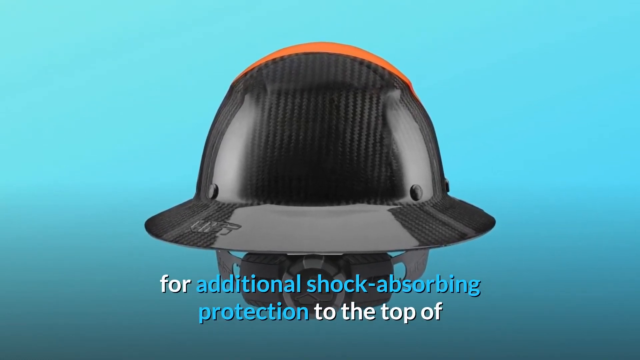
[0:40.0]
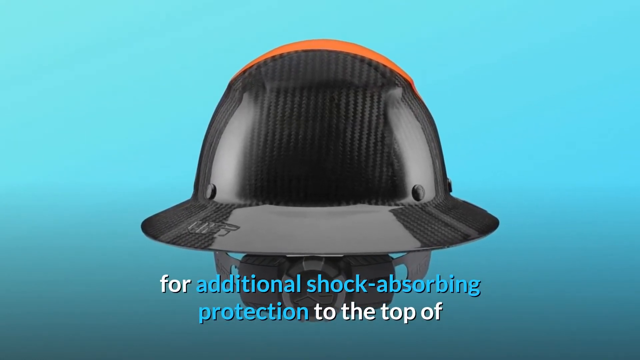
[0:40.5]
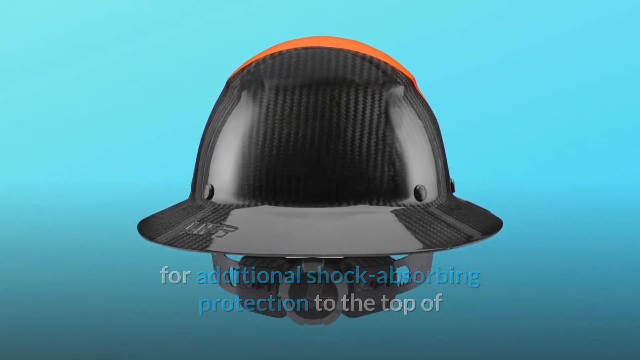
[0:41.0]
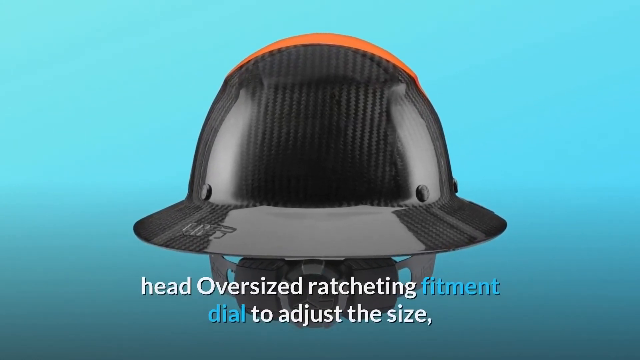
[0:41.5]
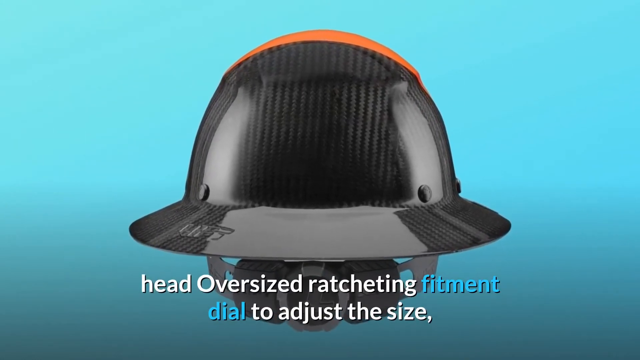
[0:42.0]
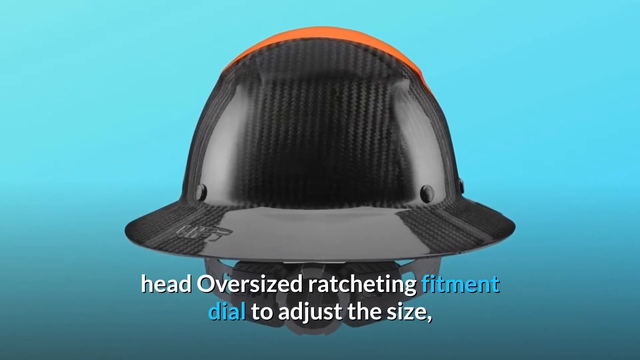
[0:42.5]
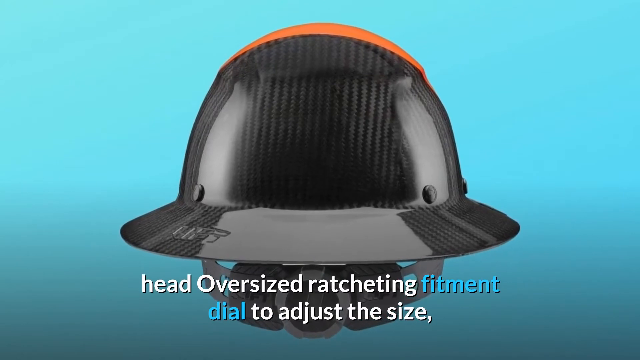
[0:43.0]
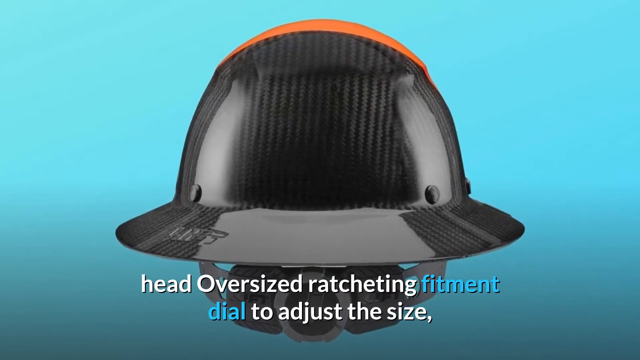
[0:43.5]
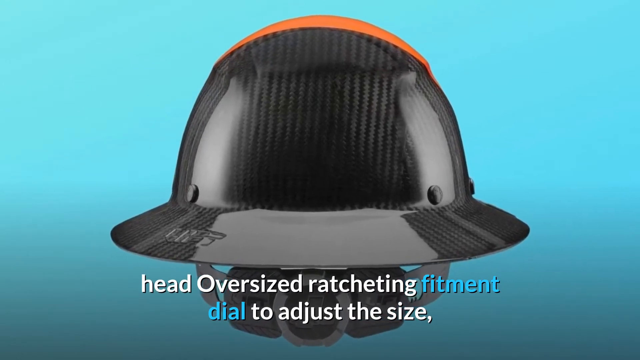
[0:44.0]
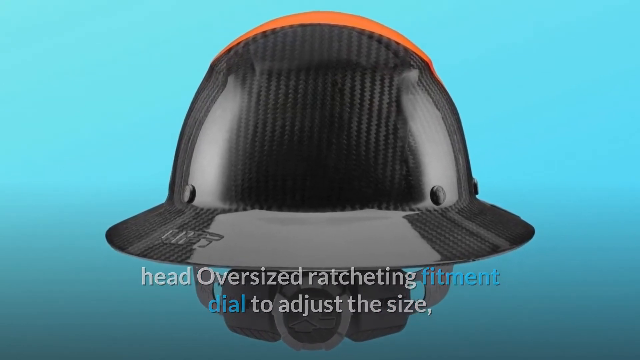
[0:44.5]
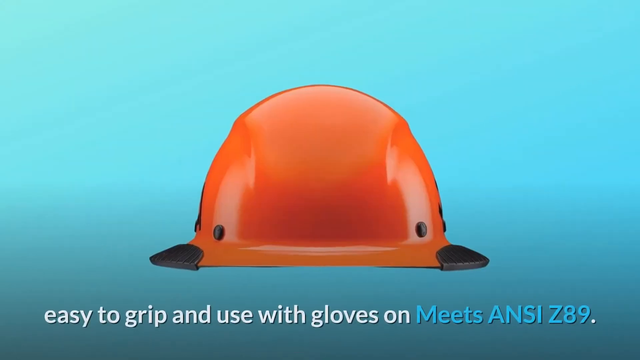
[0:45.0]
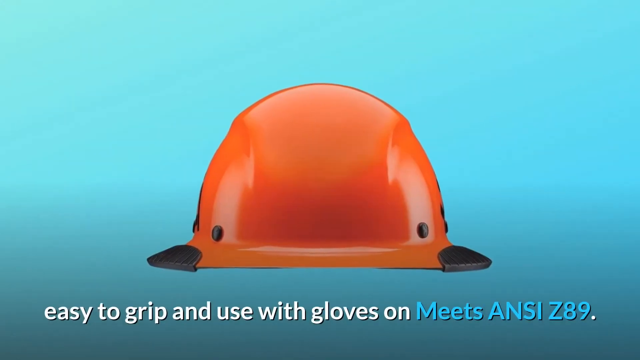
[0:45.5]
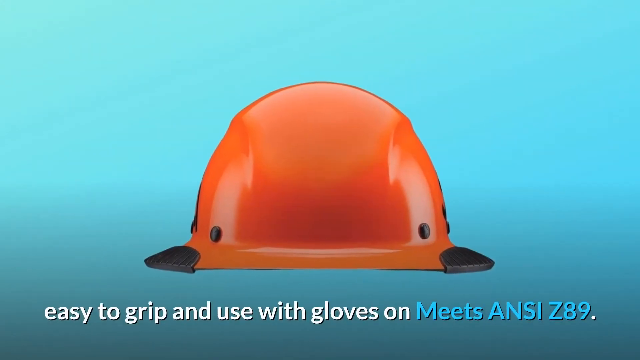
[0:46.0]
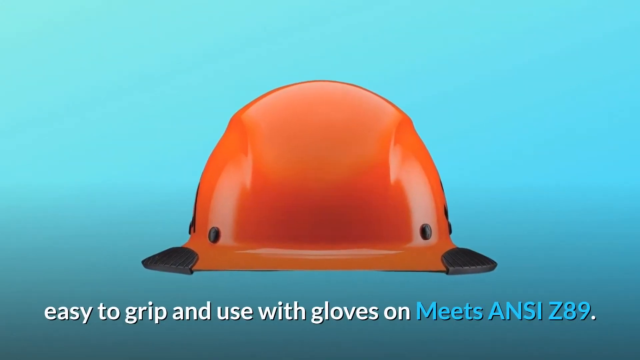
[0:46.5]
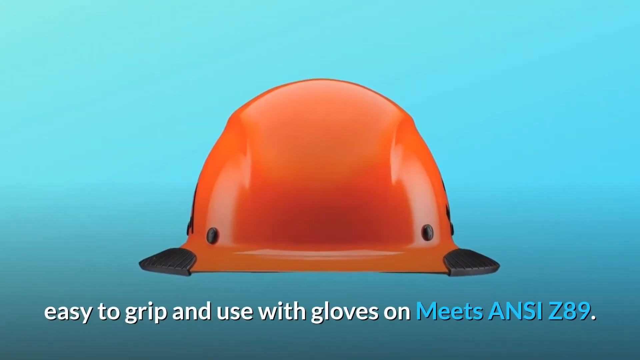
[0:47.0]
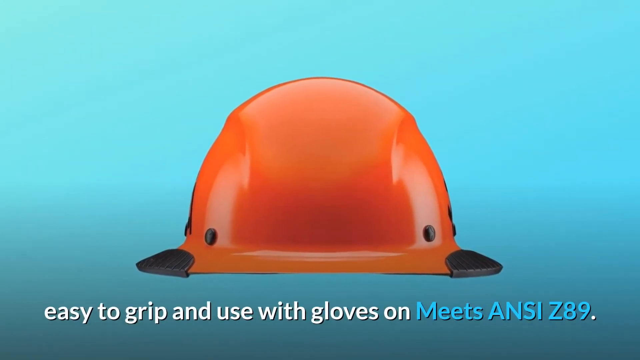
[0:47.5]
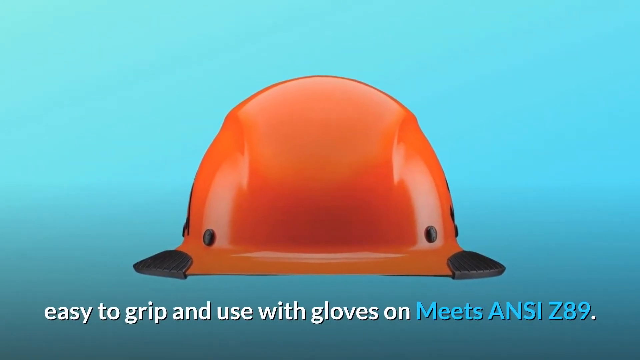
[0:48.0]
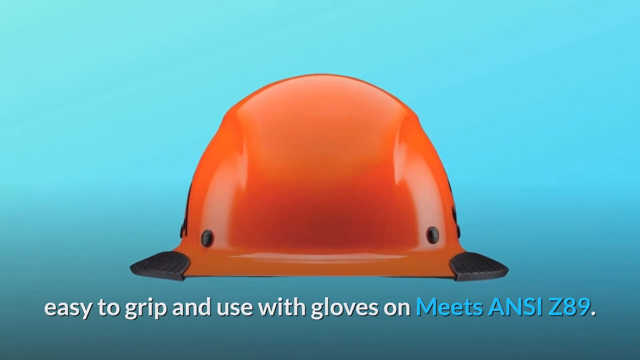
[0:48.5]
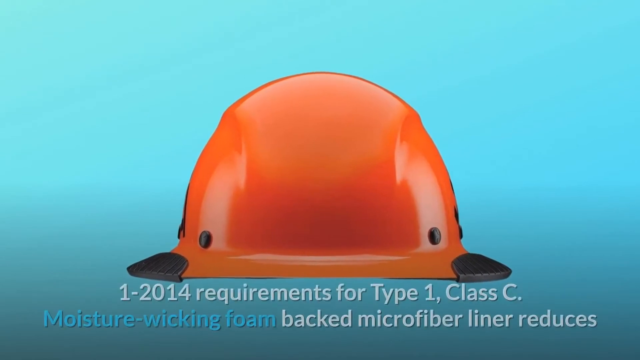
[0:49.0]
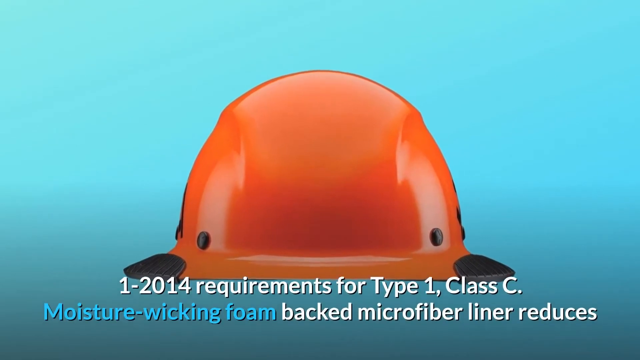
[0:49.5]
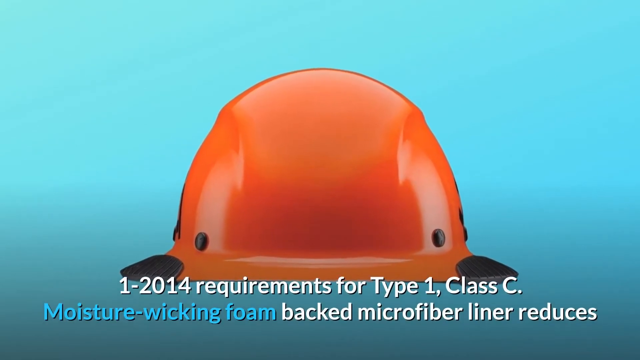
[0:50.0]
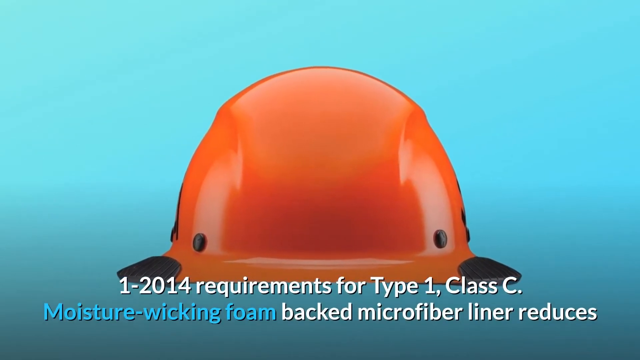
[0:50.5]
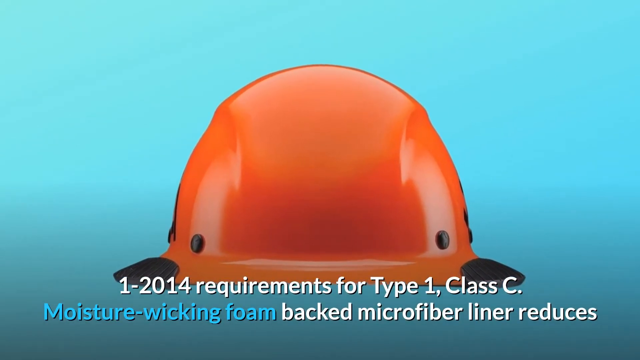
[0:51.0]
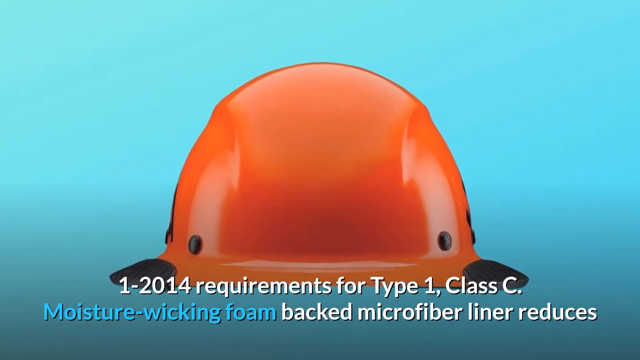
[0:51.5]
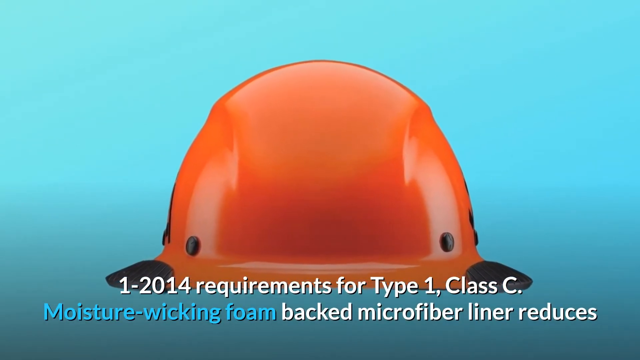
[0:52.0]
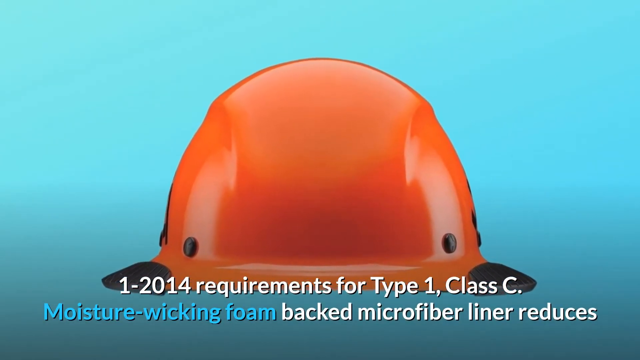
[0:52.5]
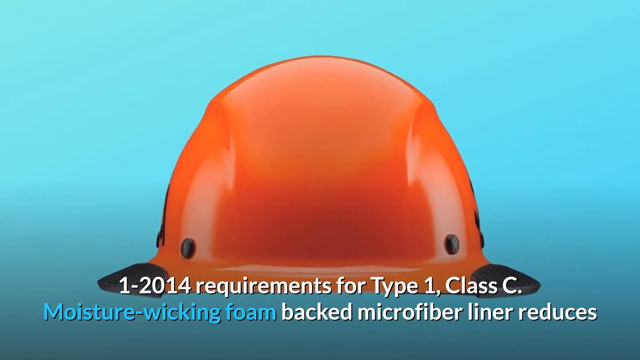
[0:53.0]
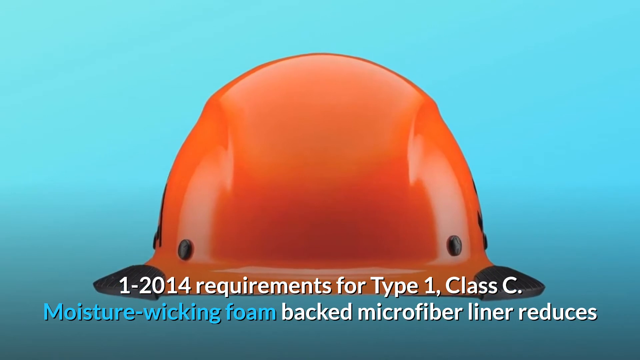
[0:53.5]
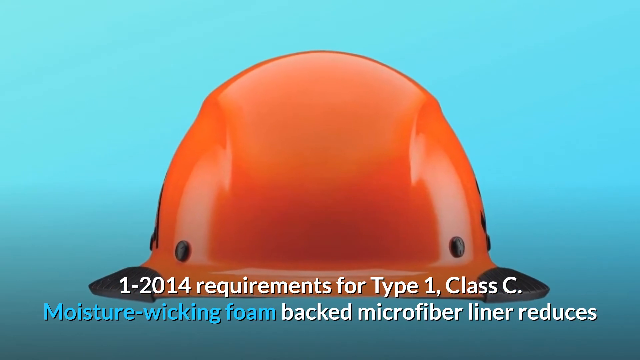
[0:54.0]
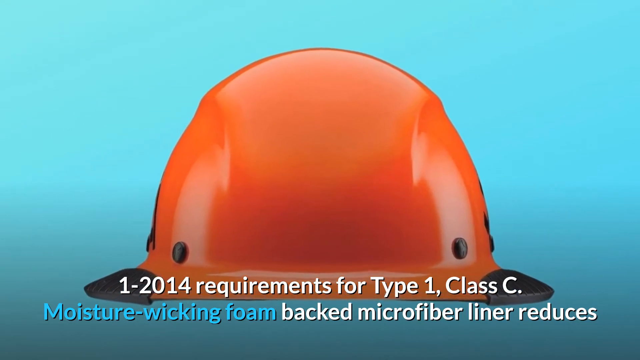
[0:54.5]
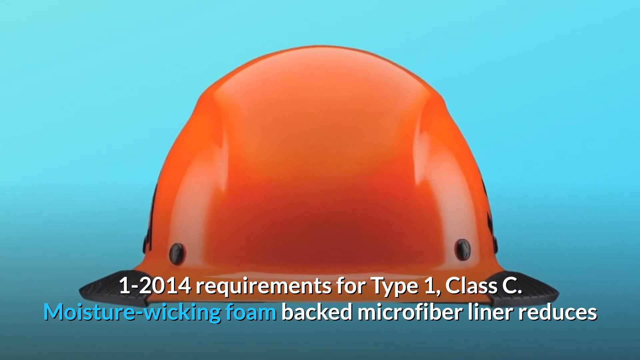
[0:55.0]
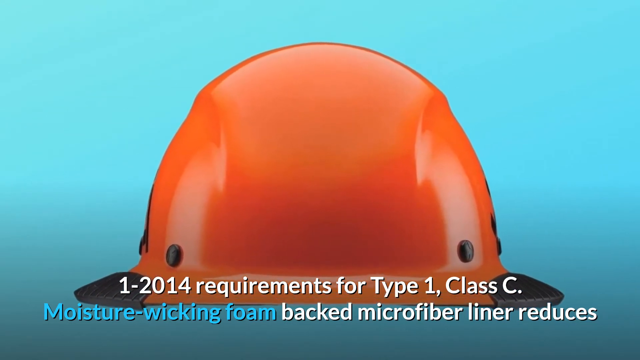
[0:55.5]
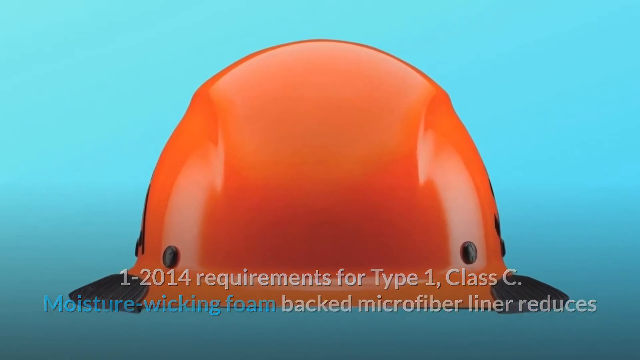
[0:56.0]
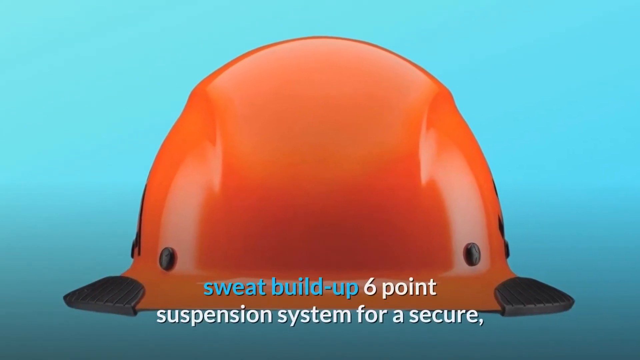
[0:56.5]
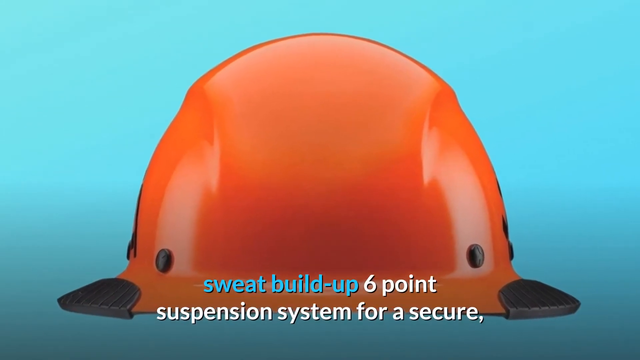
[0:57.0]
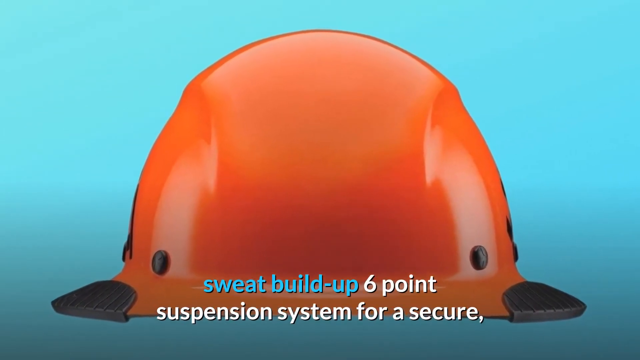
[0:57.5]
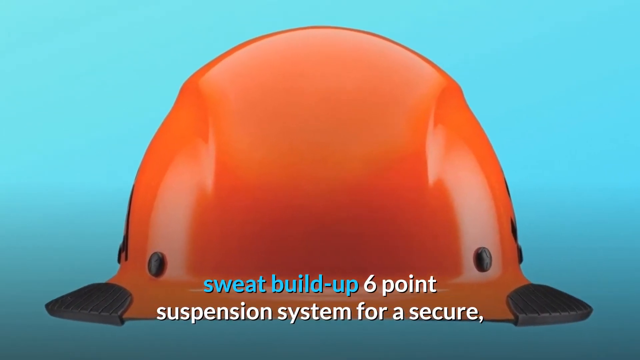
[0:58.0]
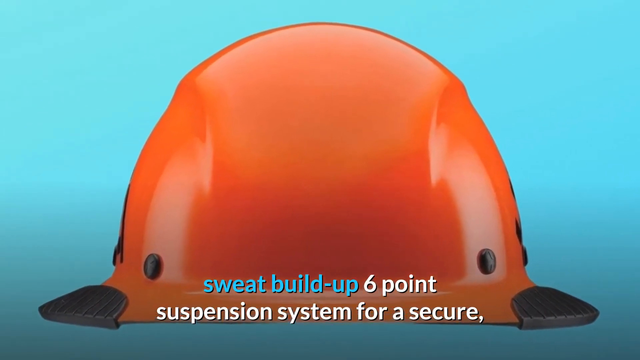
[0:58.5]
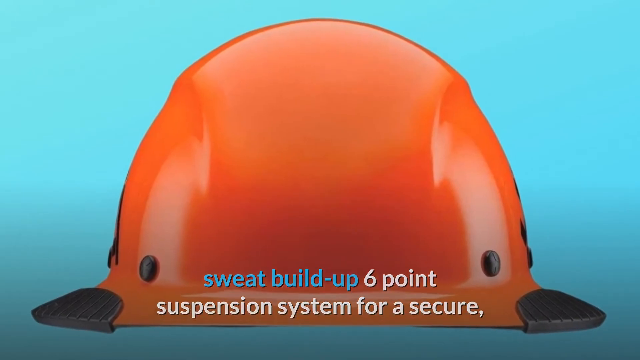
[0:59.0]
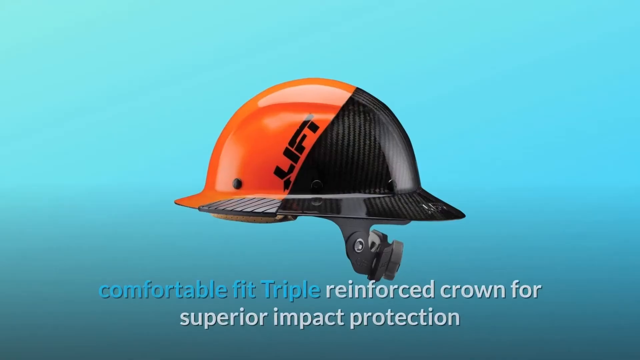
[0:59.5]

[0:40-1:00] The caption continues and finishes with "head oversized ratcheting fitment dial to adjust the size." A new image of the hat appears on screen with text reading "easy to grip and use with gloves on meets ANSI Z89.1 2014 requirements for Type 1 Class C moisture wicking foam backed microfiber liner reduces sweat build-up six-point suspension system for a secure comfortable triple fit reinforced crown for superior impact protection." The video seems to be covering the fact that the inside of the hat is made of foam. The images of the hats are still photos that are zoomed in on while the captions are on screen.